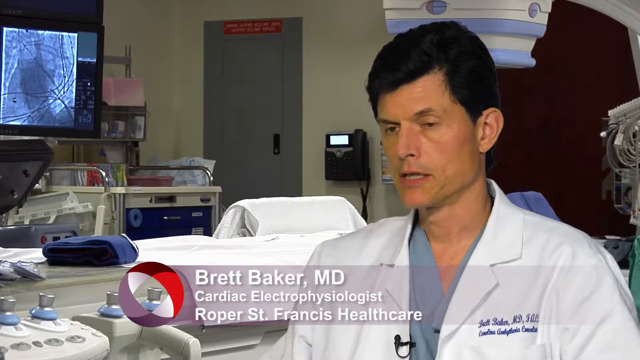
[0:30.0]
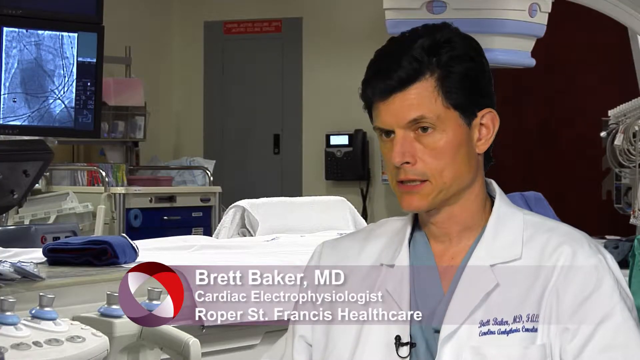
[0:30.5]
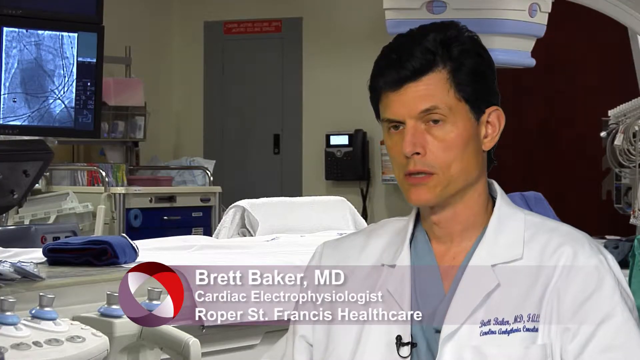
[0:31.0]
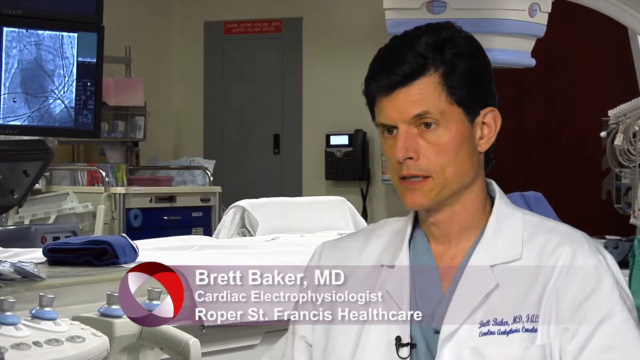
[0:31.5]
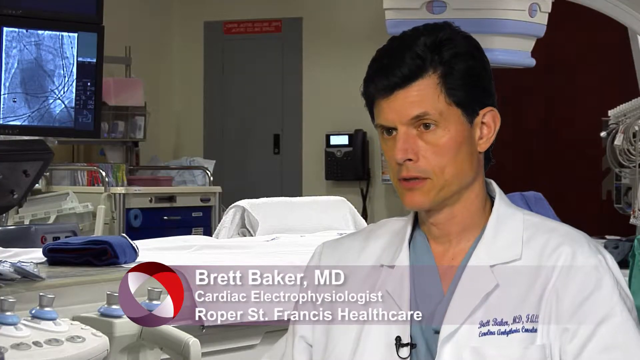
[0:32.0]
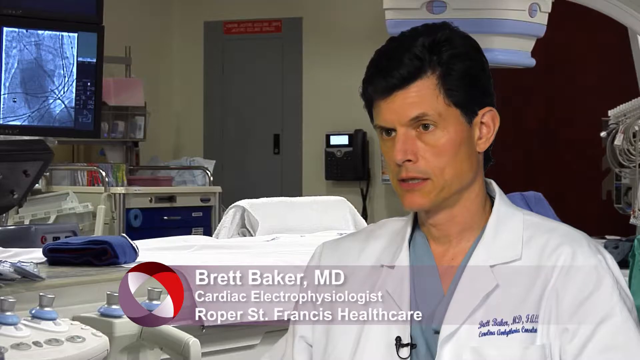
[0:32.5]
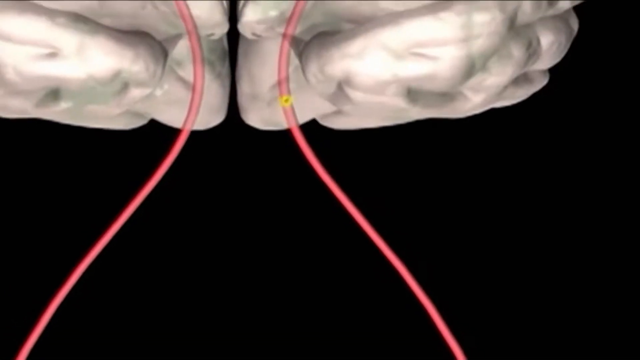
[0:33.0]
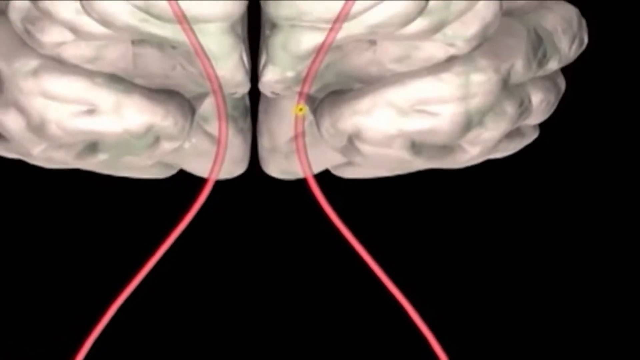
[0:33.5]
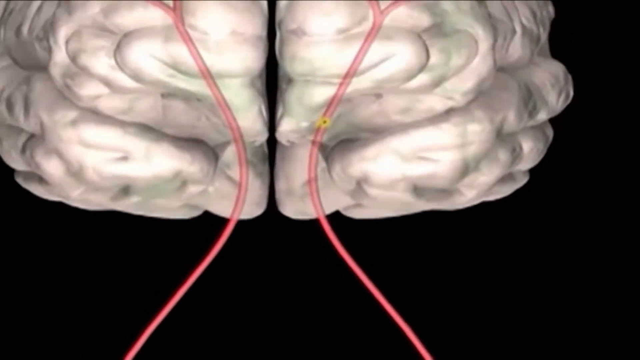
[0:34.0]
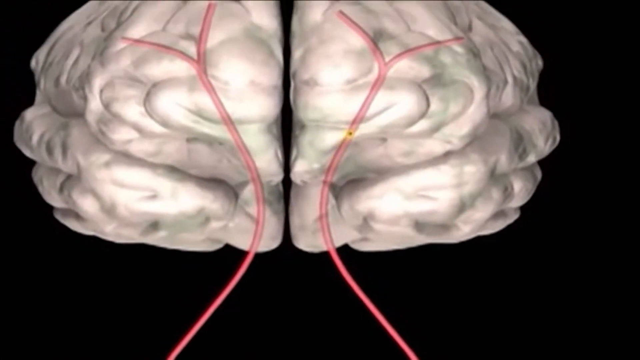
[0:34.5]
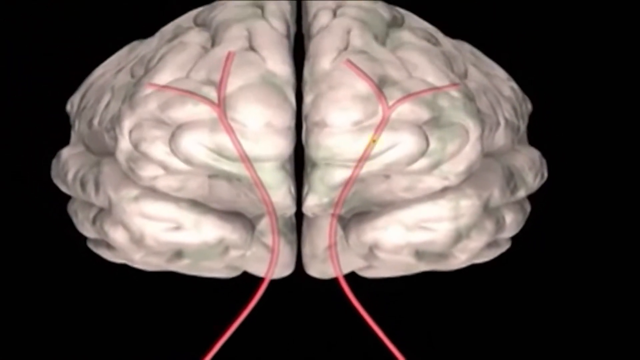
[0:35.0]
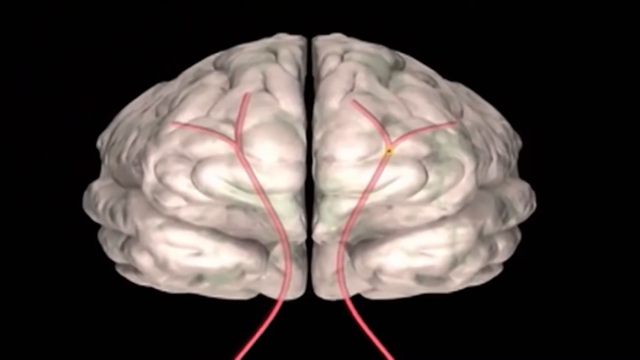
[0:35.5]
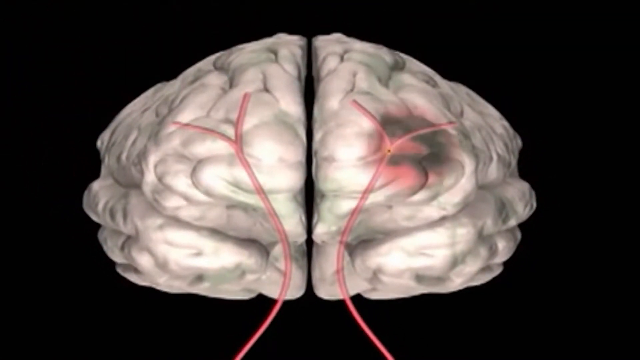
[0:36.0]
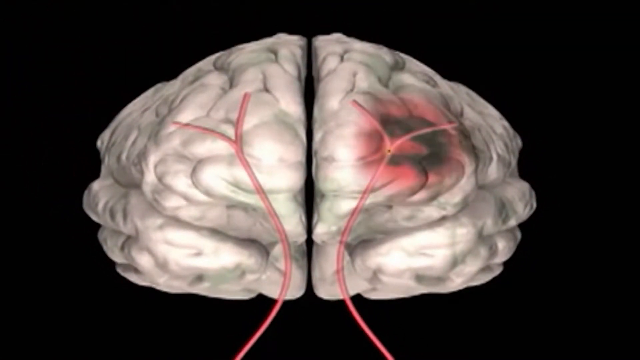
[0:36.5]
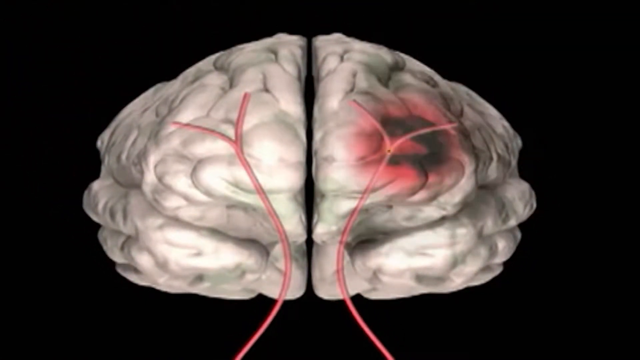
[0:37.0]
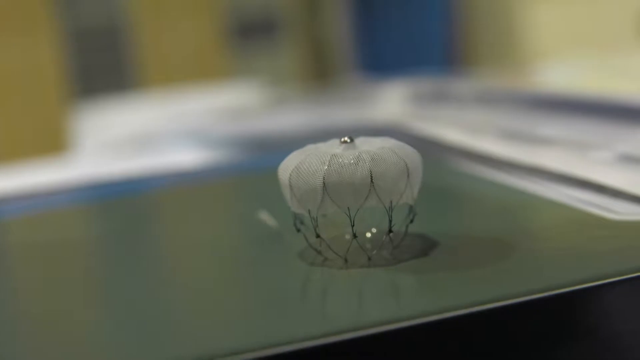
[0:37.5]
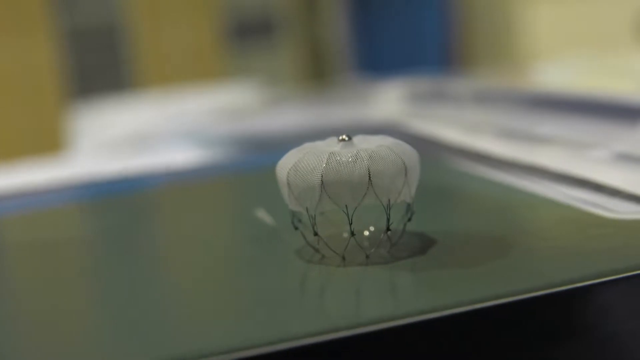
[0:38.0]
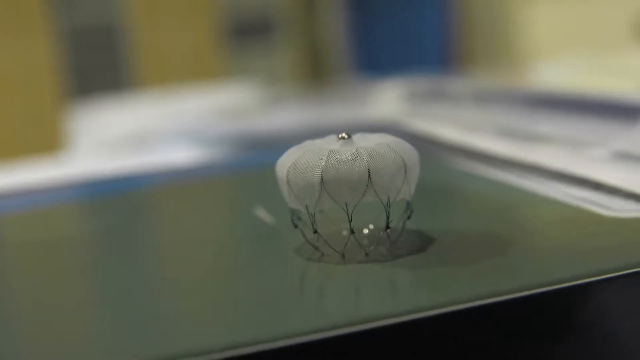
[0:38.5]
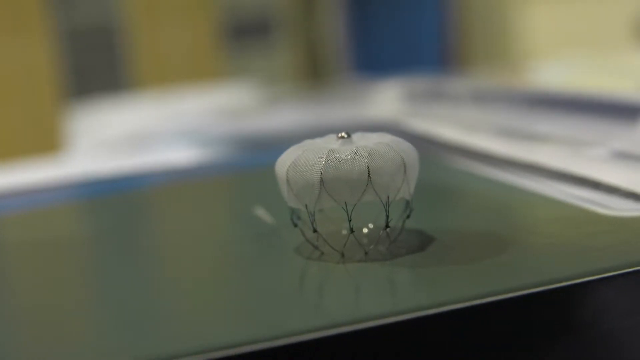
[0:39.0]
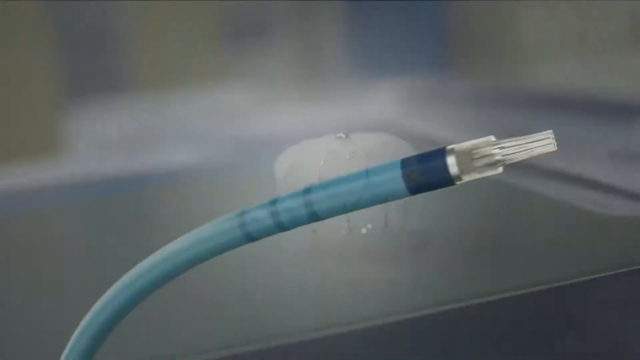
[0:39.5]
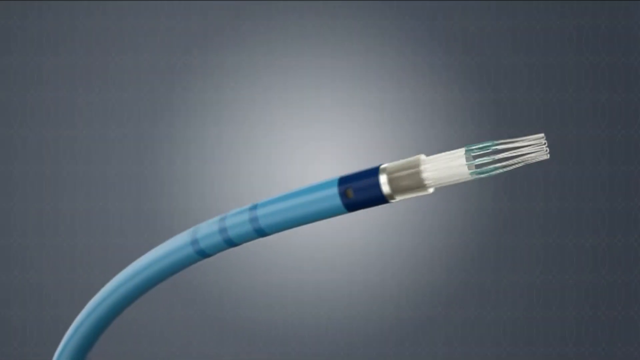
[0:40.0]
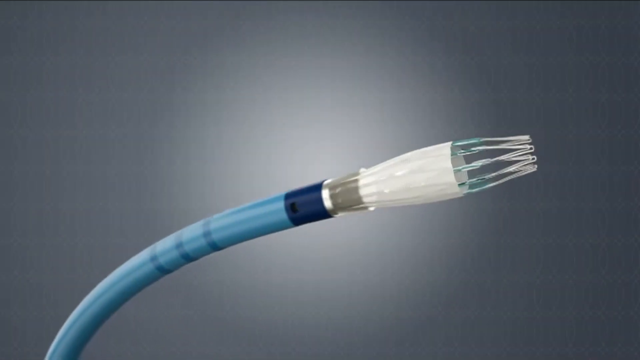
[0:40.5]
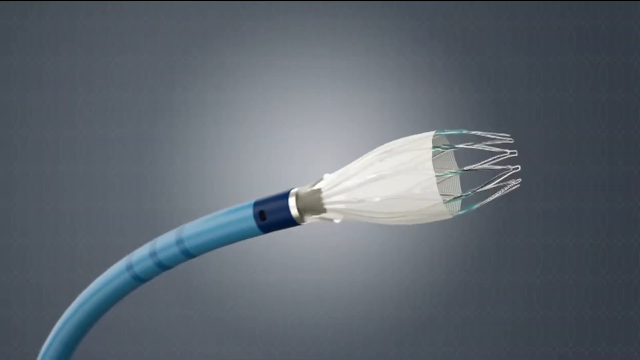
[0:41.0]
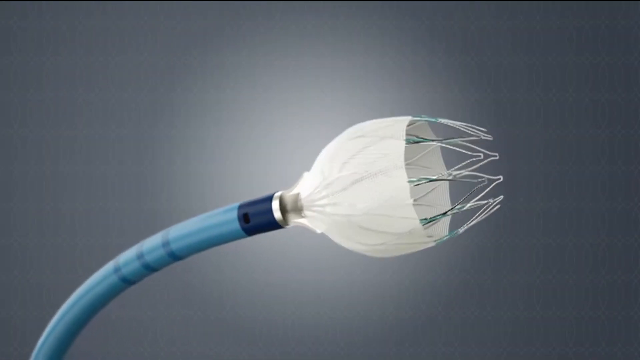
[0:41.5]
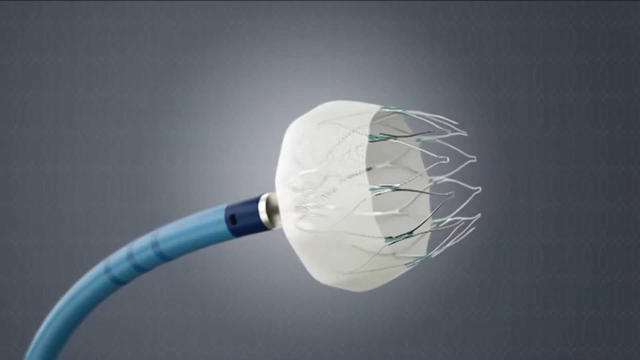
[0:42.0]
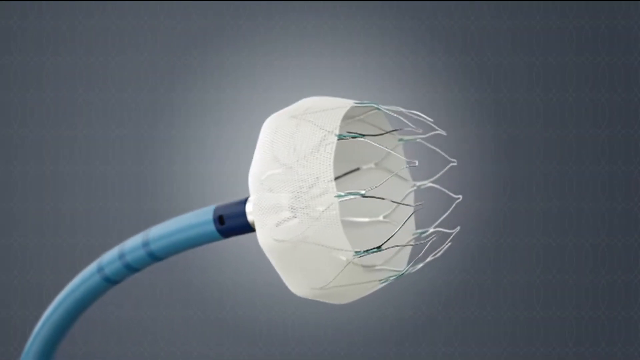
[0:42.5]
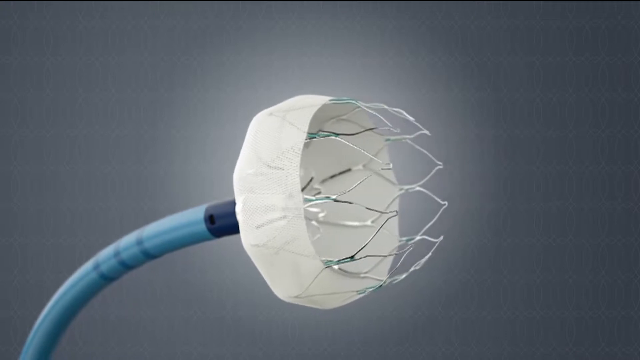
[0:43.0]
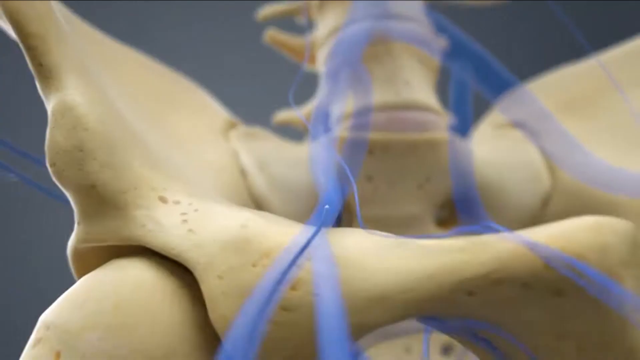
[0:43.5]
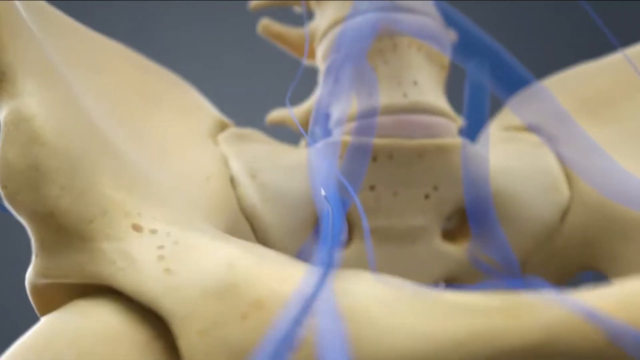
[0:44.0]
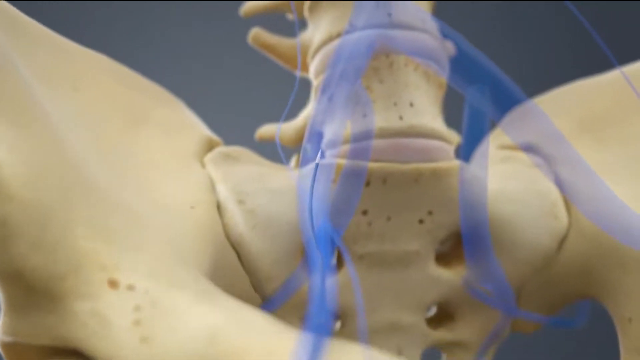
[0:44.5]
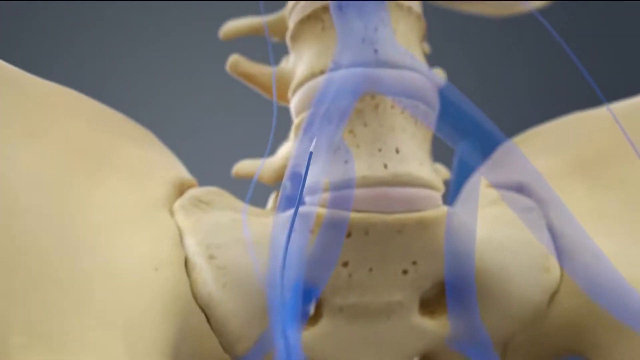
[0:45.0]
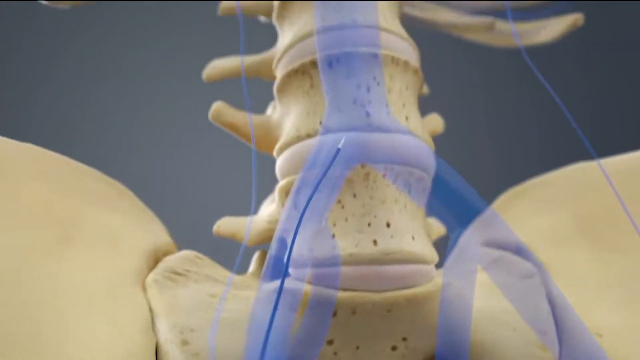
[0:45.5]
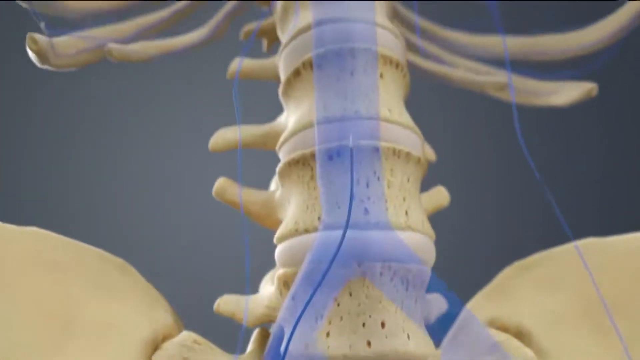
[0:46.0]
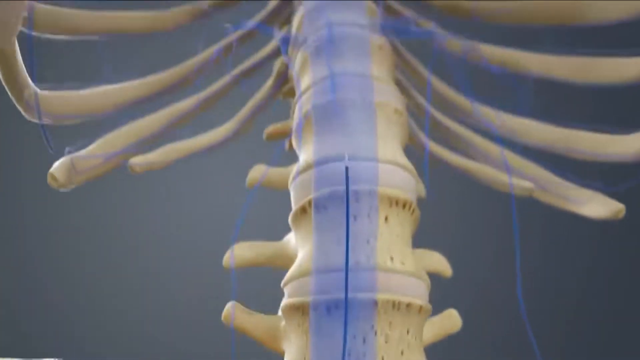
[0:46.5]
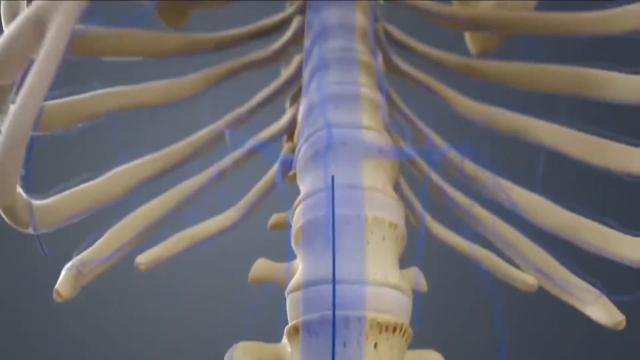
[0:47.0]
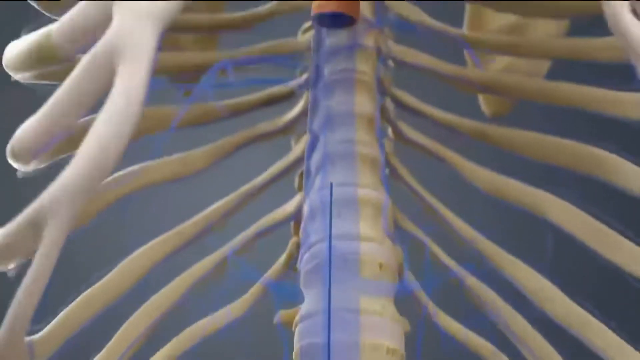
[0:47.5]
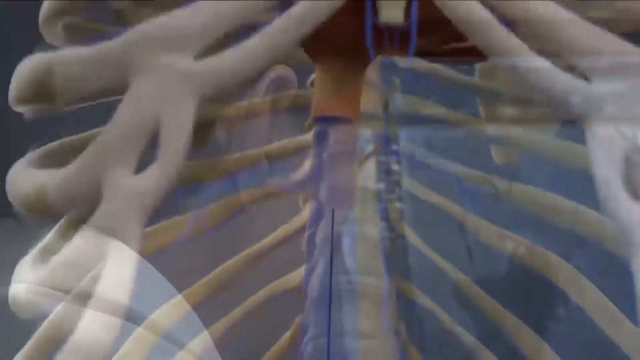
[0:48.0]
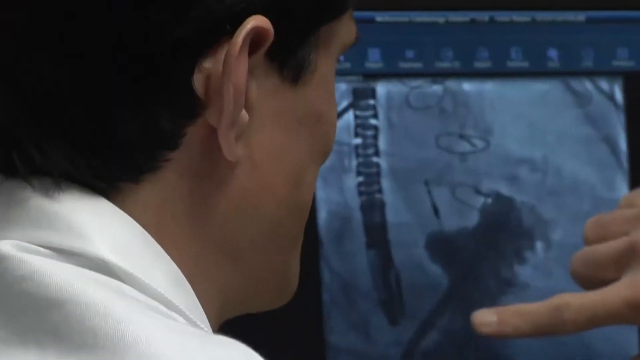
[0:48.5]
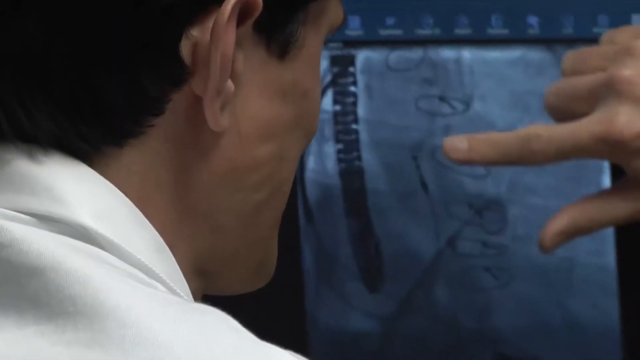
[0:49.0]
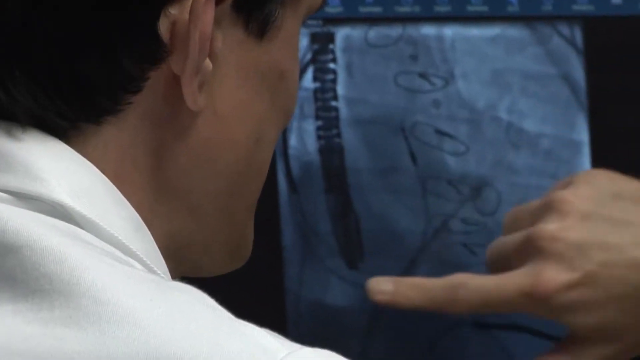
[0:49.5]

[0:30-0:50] Brett Barker continues talking, with a standard hospital room in the background. A 3D animation of a brain follows, focused on brain waves. A red vein goes into the brain, and a yellow particle or cell goes into the brain stem, which is red; the animation has no labels. The animation expands the redness surrounding it and shows greater detail of the cell moving into the spine and then to the brain. The cell is possibly a blood cell of some sort.